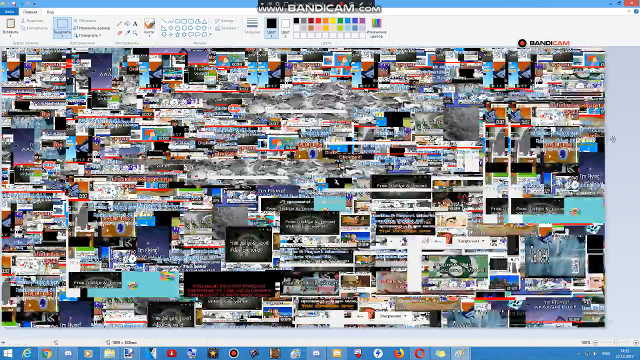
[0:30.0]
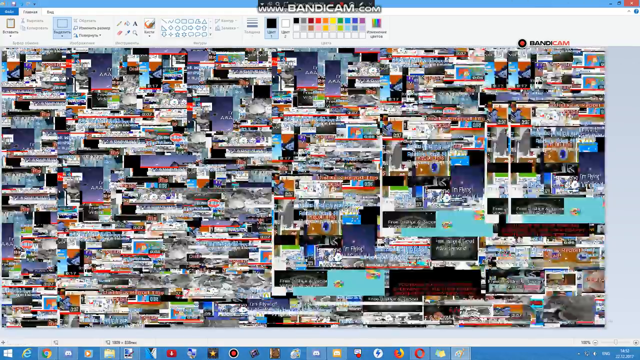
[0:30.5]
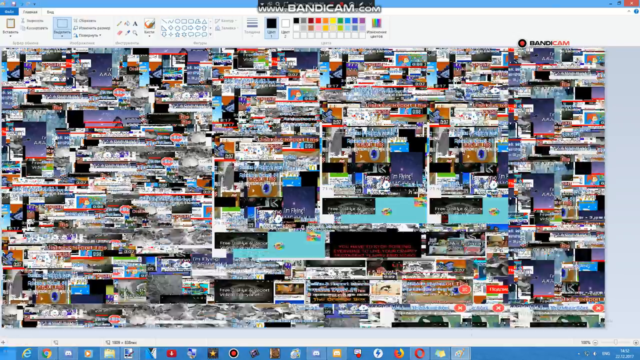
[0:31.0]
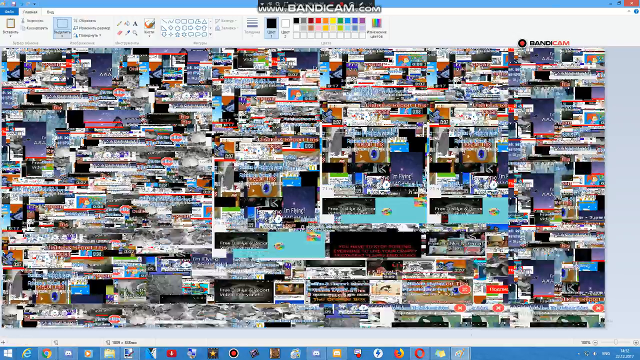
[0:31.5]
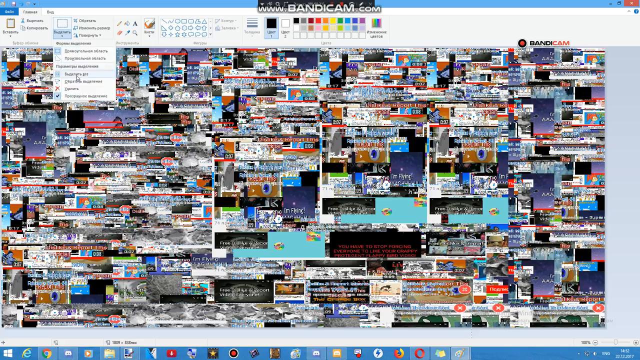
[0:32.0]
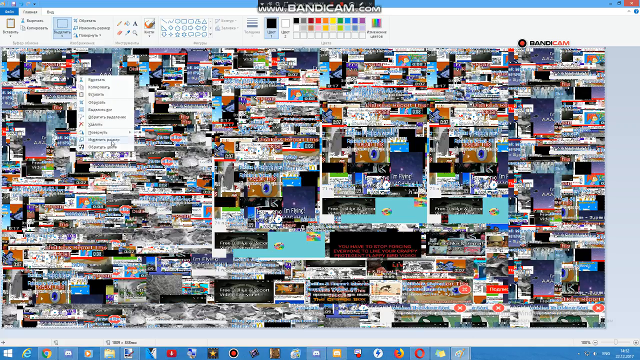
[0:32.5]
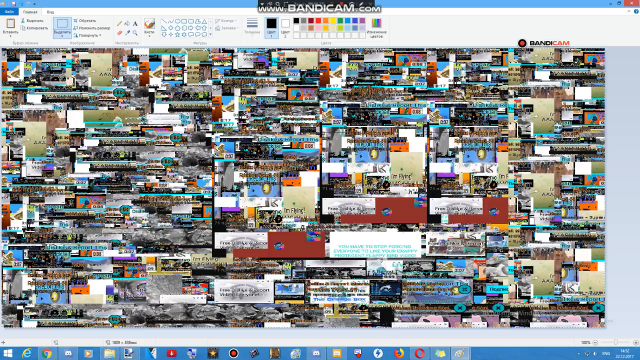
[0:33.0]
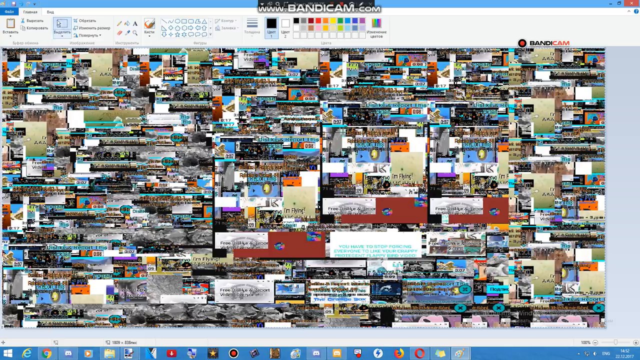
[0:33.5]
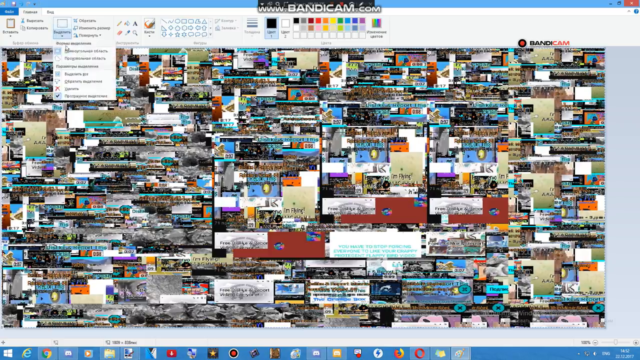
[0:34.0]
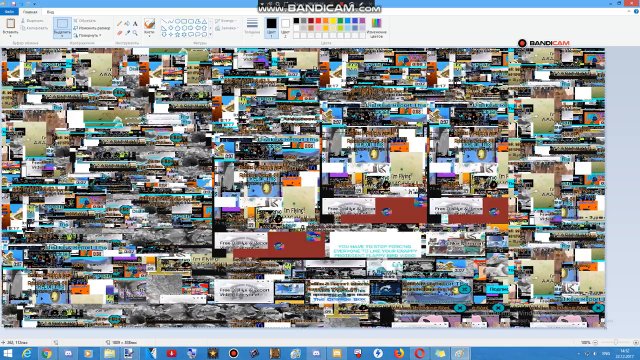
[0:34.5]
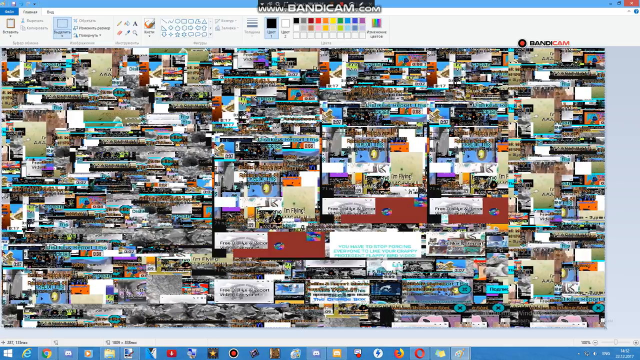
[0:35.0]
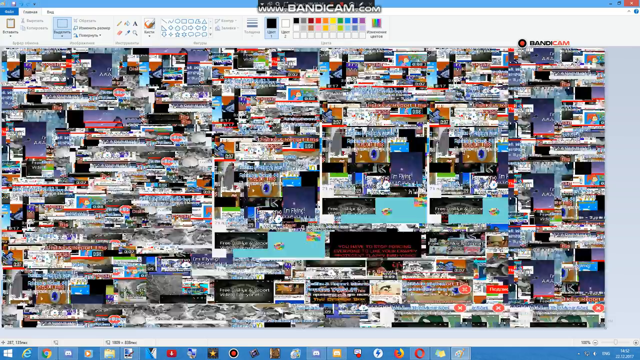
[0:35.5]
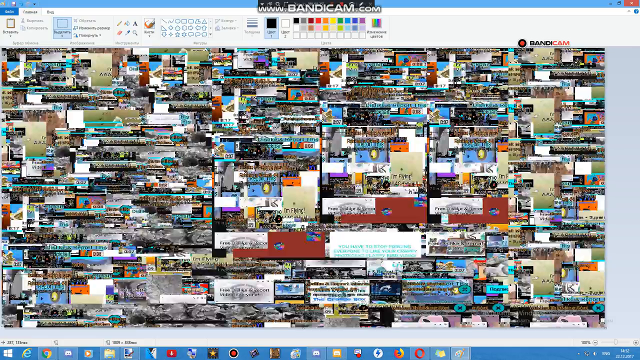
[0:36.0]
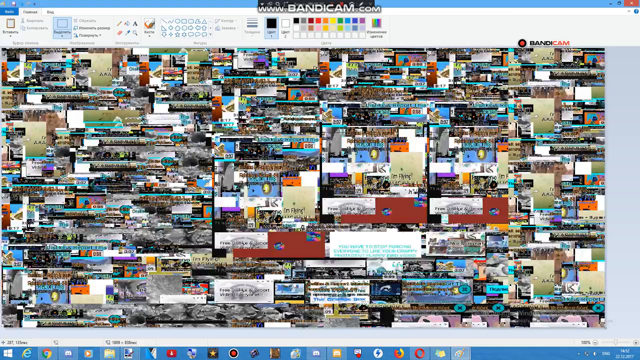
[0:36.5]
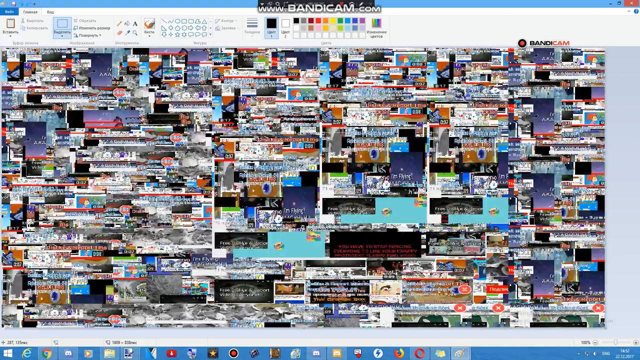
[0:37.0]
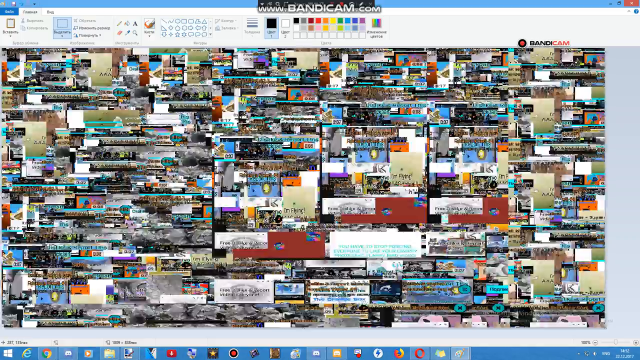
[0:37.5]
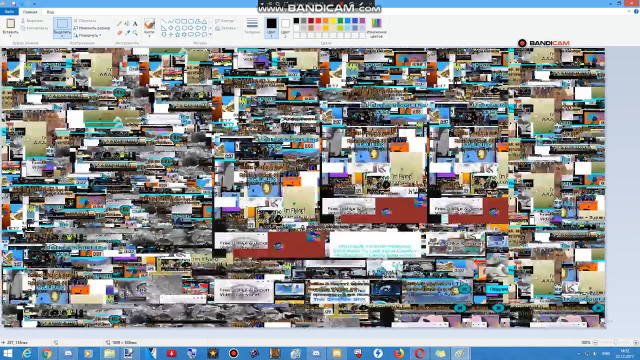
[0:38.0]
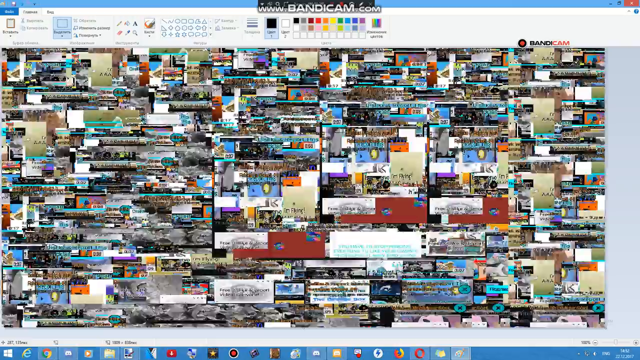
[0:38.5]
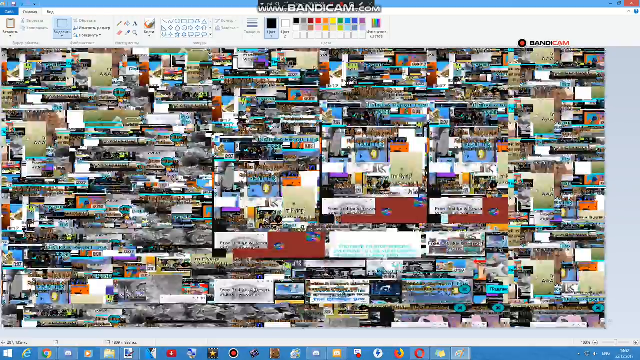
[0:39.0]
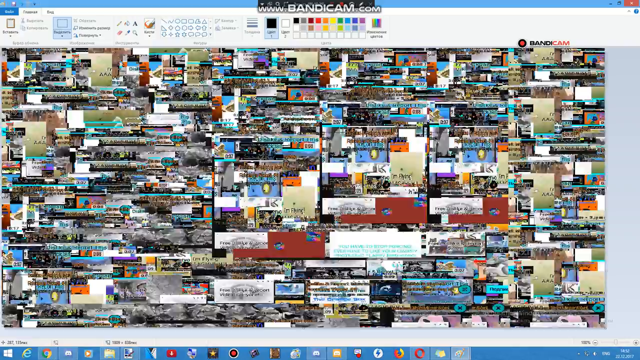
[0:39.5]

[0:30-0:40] The copy-pasting of the homepage is finished, and the colors are rapidly inverted back and forth. YouTube and Paint are still in use, and "bandicam.com" is still shown.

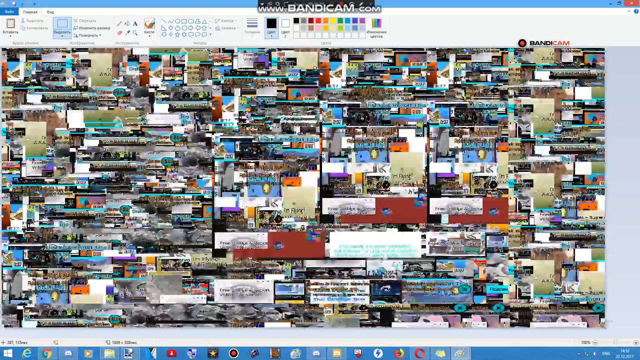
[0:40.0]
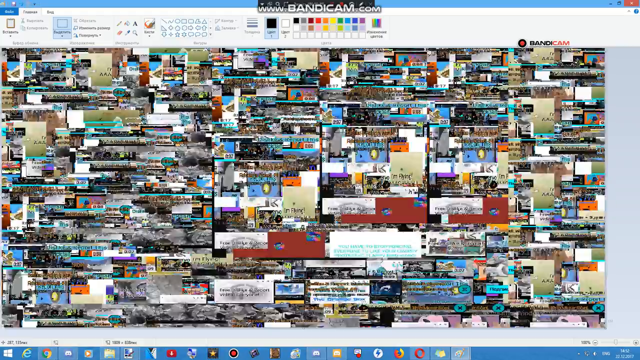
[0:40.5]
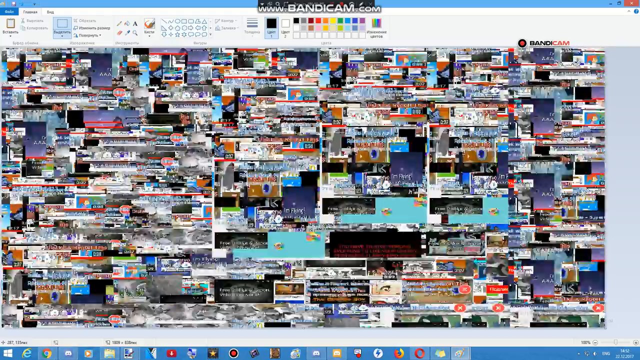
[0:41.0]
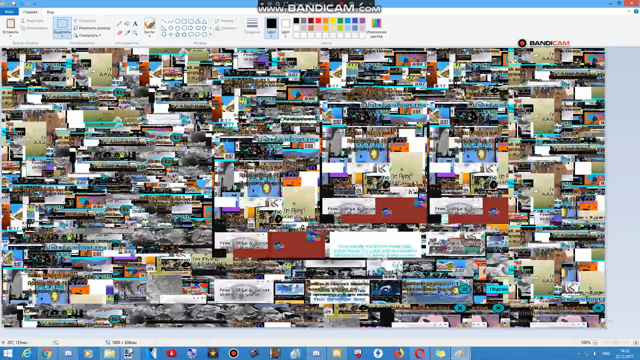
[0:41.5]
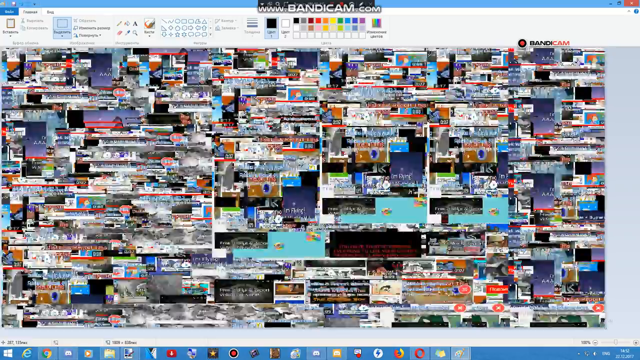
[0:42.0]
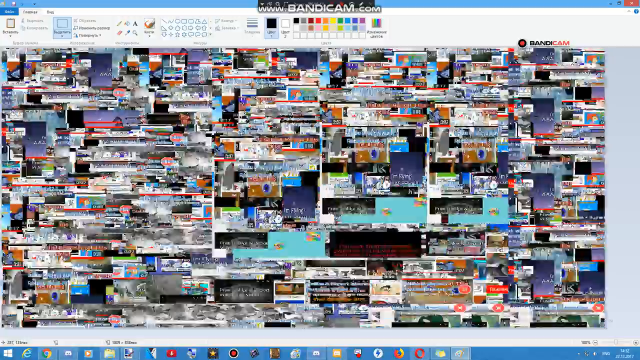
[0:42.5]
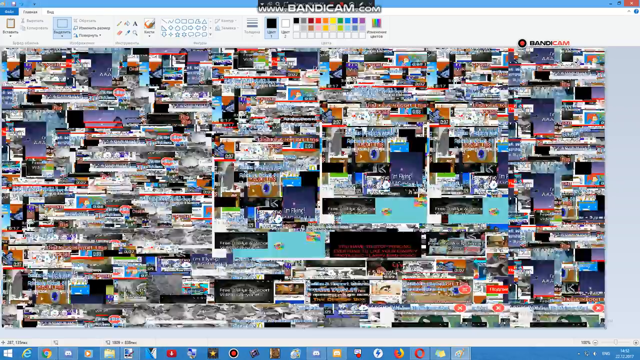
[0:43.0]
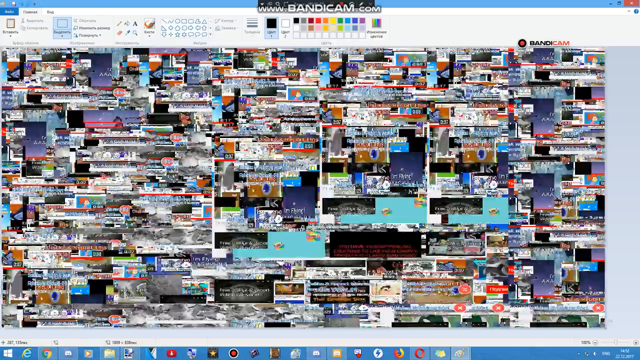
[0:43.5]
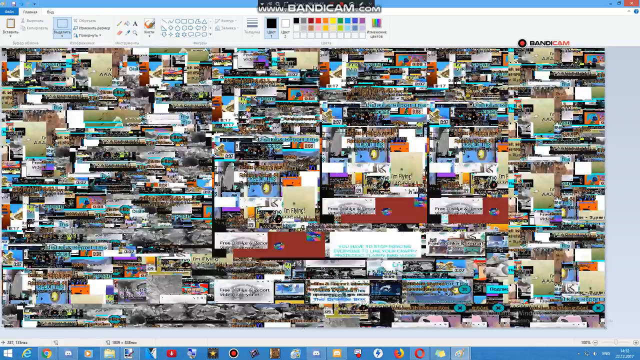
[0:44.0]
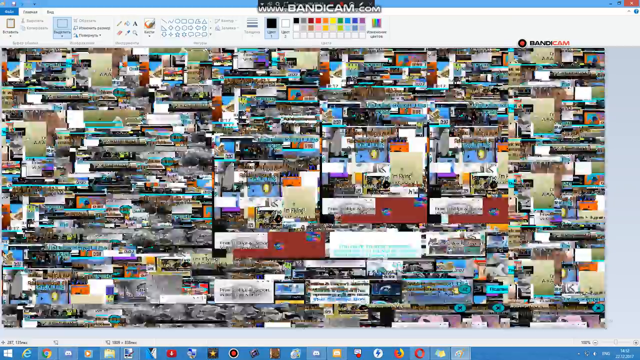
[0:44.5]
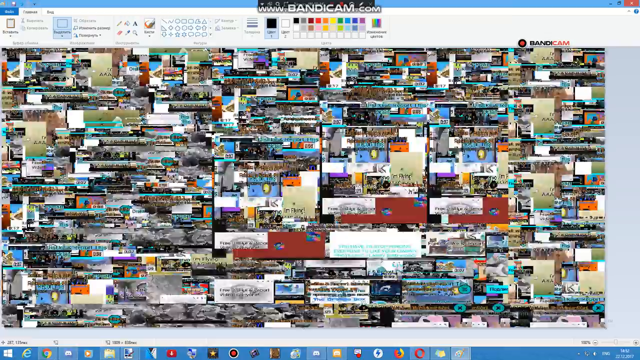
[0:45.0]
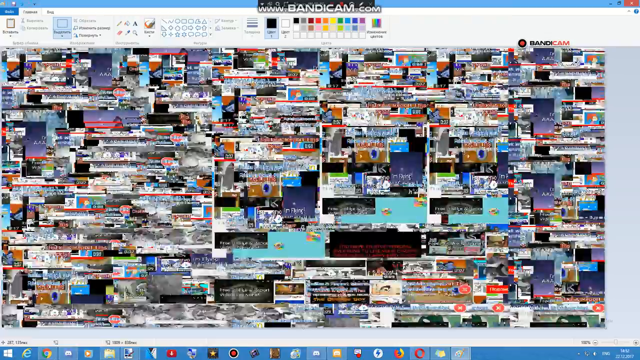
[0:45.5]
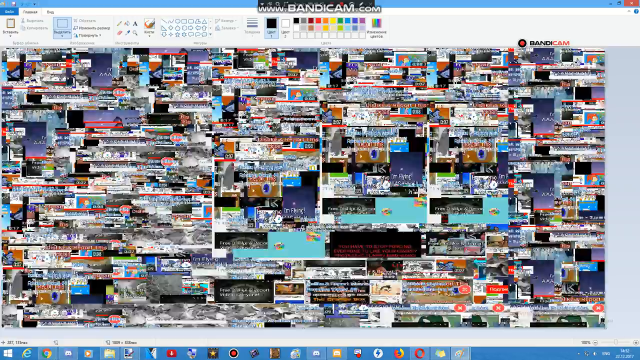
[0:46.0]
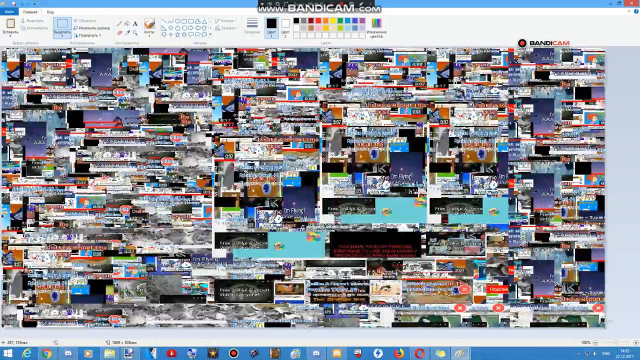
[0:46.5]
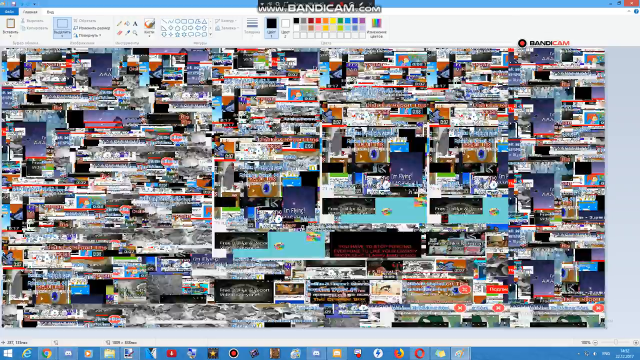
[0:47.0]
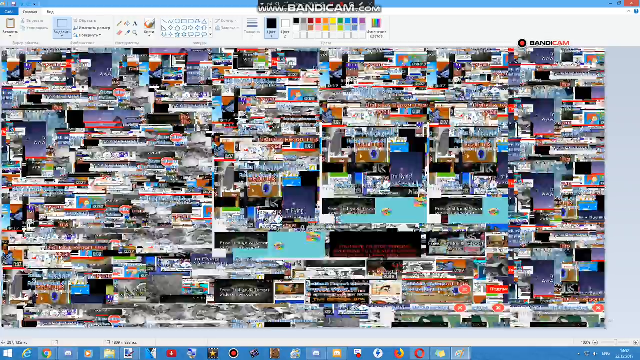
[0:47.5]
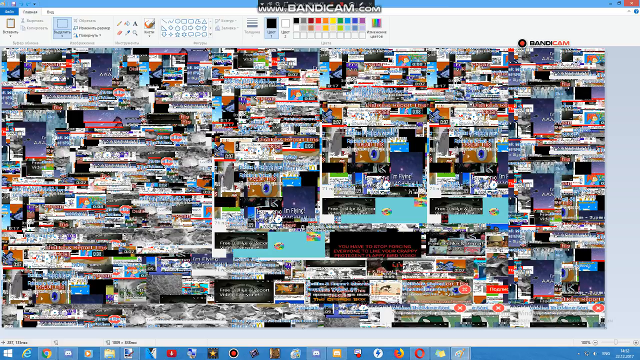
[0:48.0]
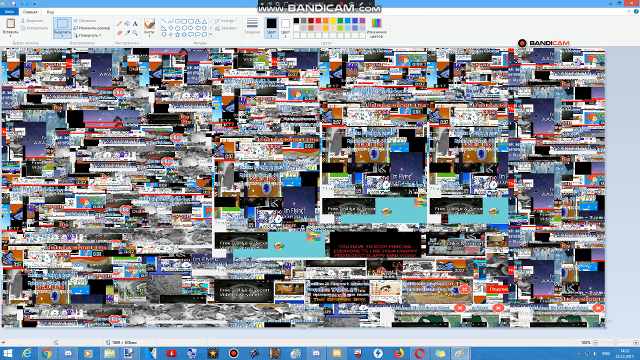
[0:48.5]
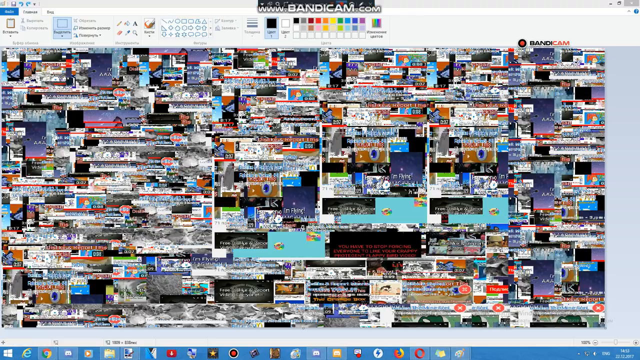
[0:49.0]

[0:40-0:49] The colors continue to be inverted rapidly back and forth for a while. Then the work apparently gets saved, and the tab is closed.